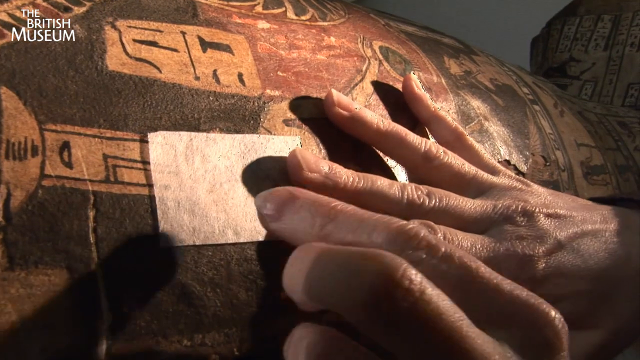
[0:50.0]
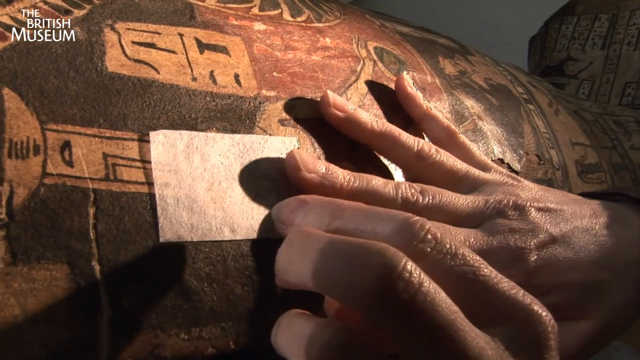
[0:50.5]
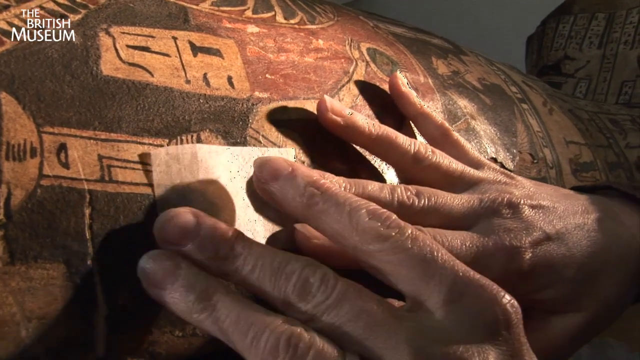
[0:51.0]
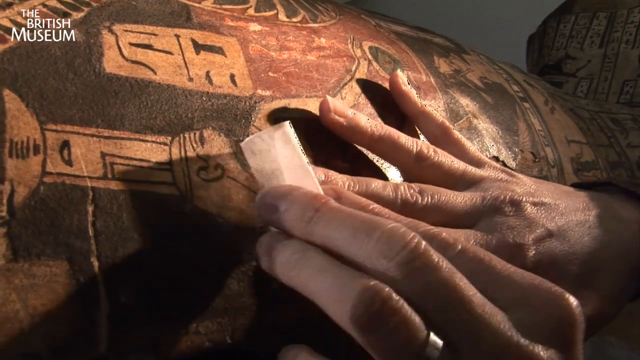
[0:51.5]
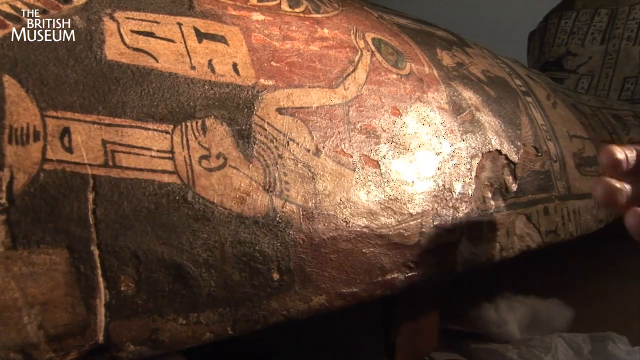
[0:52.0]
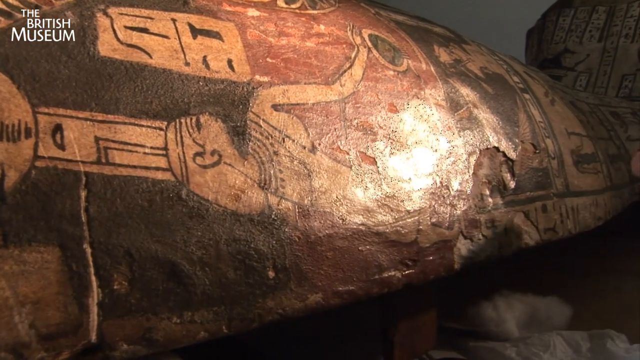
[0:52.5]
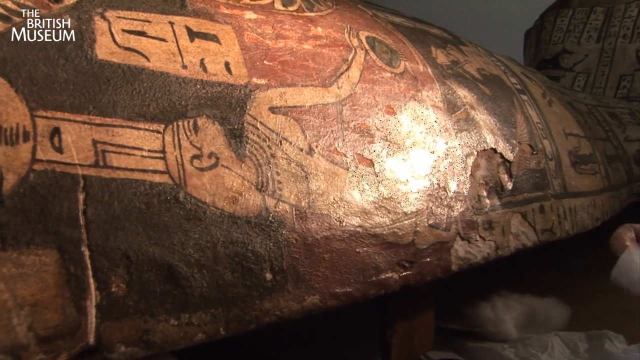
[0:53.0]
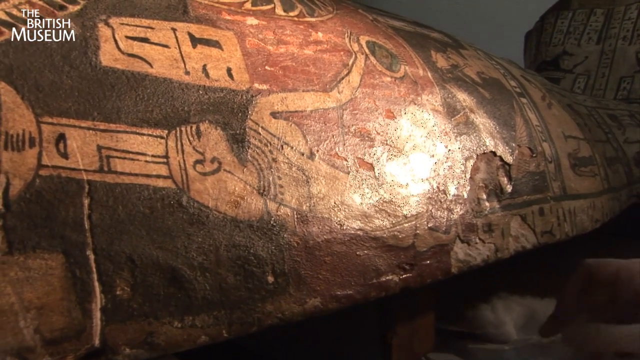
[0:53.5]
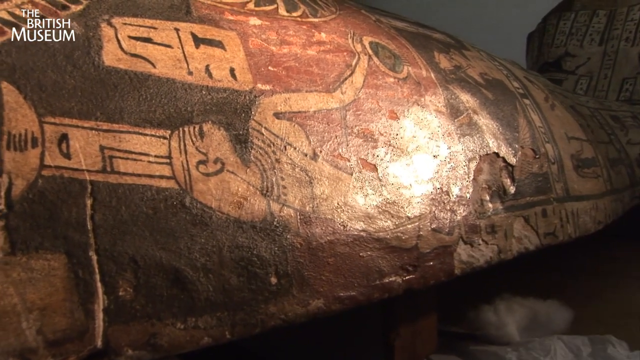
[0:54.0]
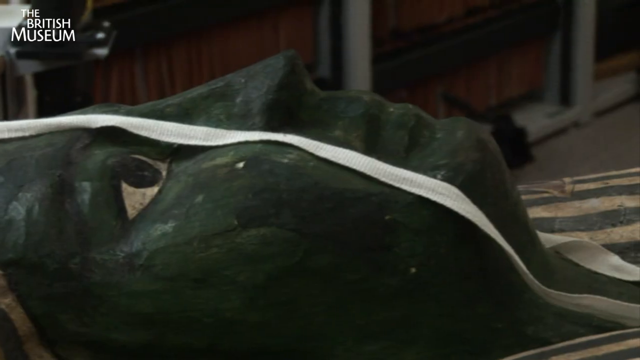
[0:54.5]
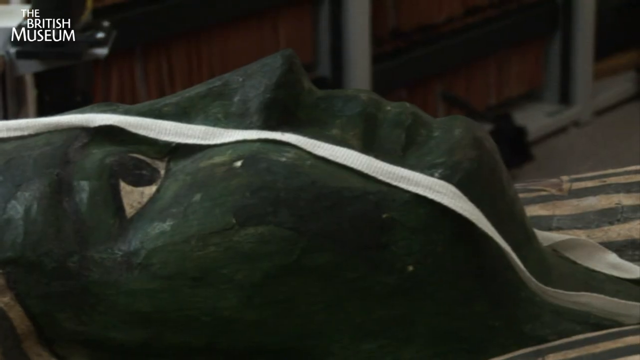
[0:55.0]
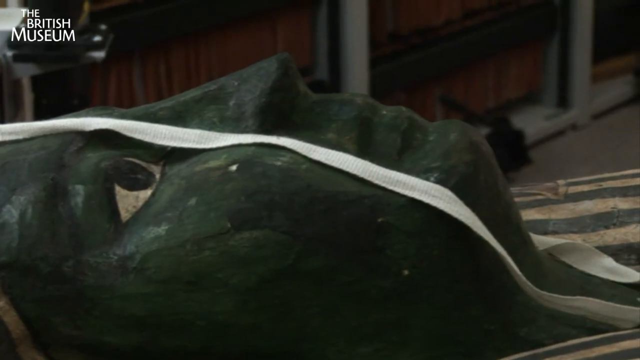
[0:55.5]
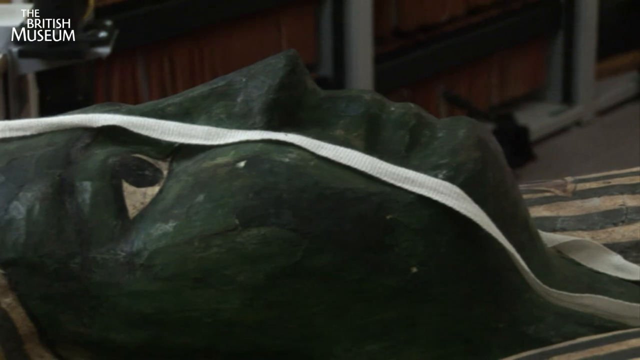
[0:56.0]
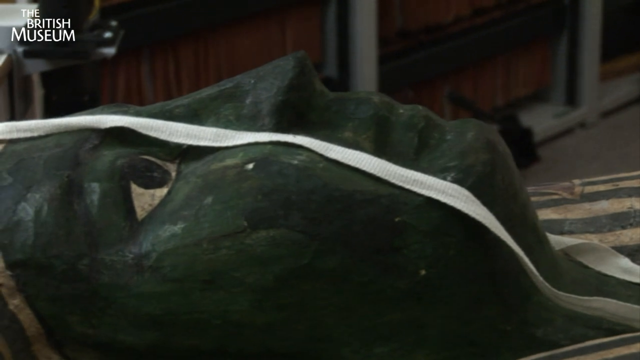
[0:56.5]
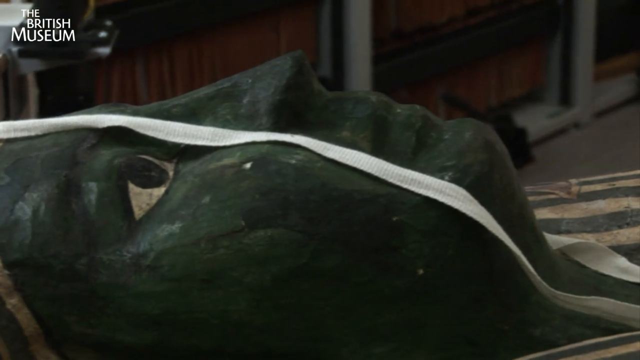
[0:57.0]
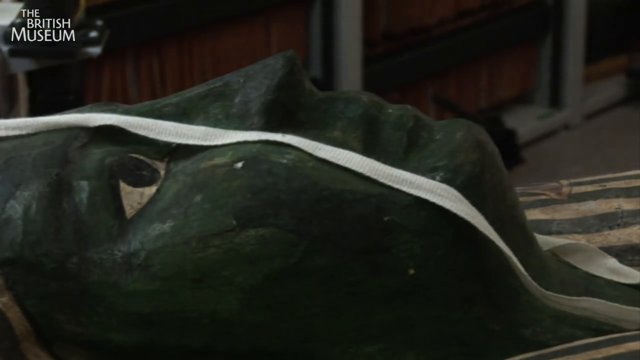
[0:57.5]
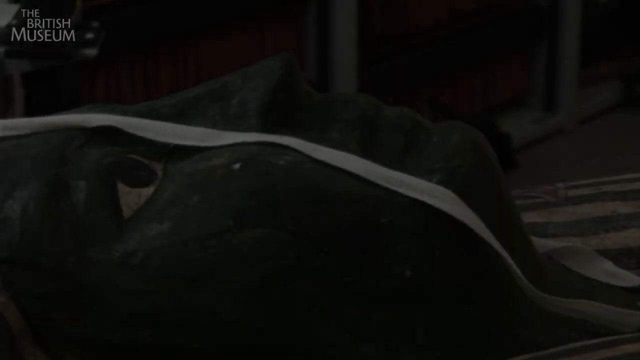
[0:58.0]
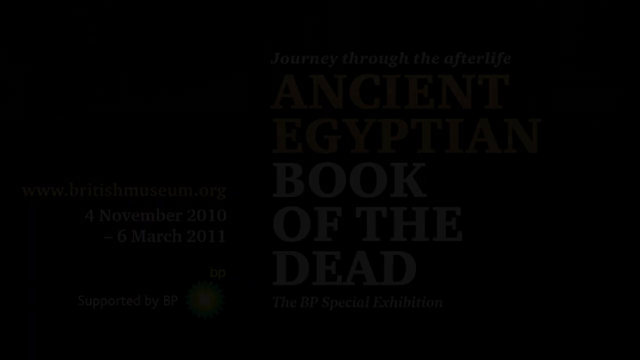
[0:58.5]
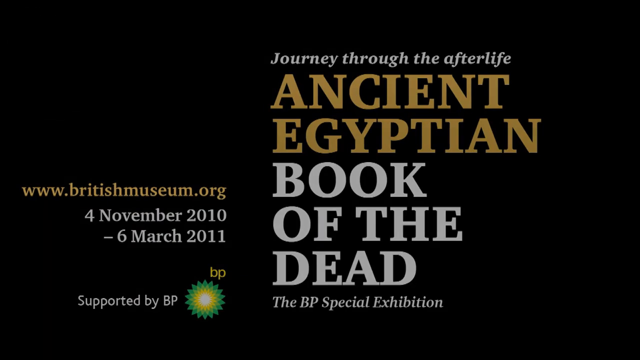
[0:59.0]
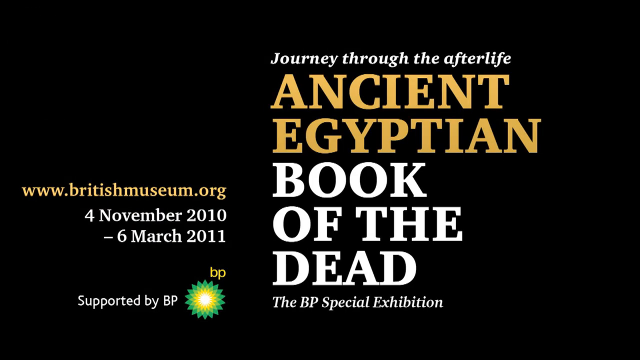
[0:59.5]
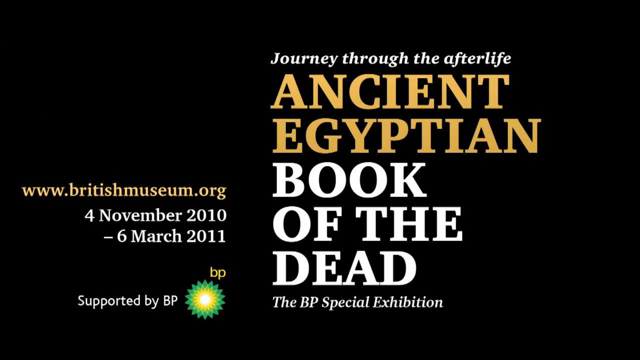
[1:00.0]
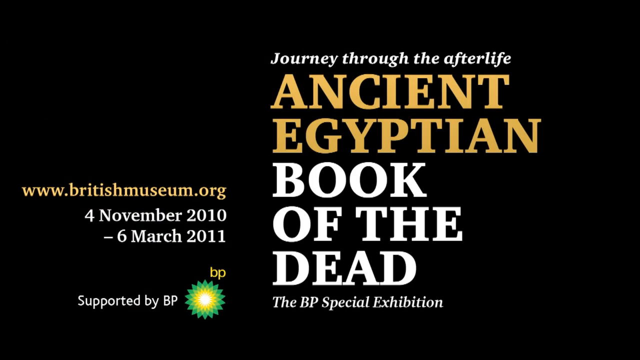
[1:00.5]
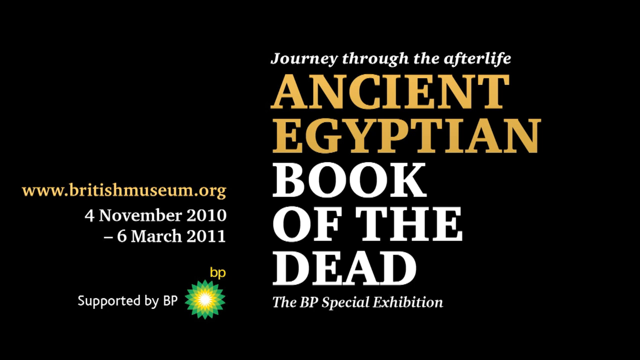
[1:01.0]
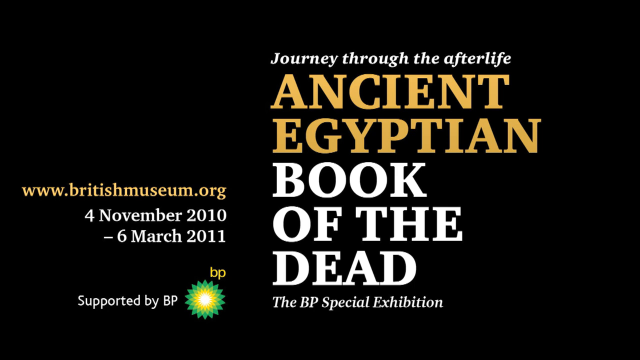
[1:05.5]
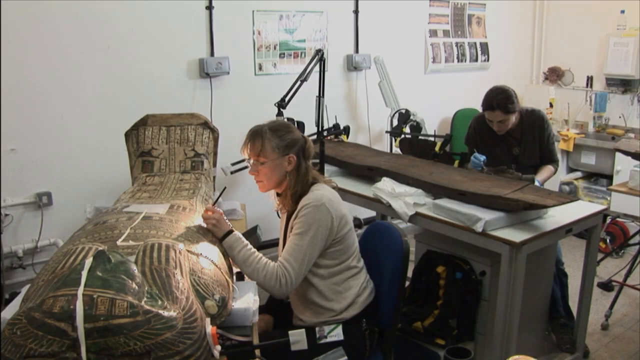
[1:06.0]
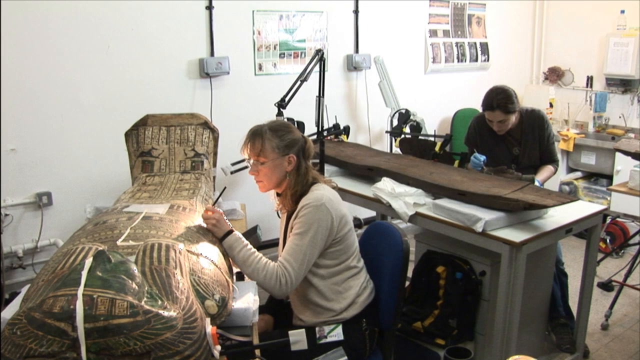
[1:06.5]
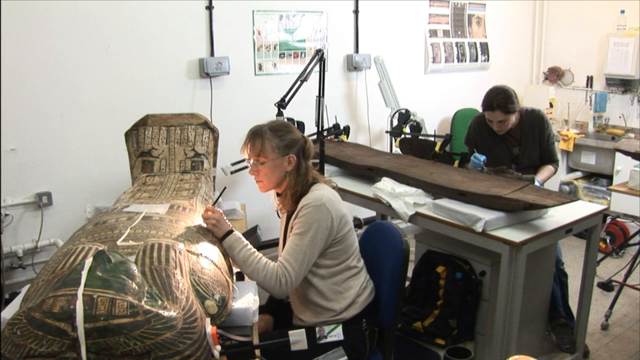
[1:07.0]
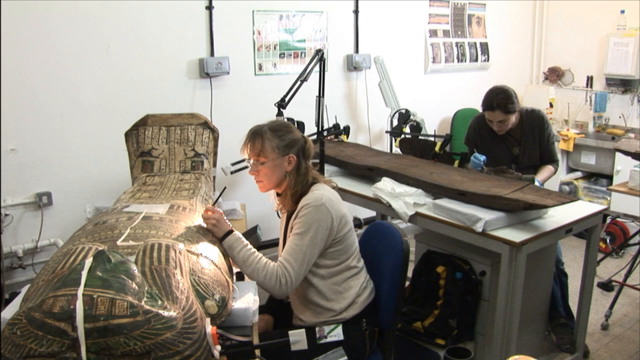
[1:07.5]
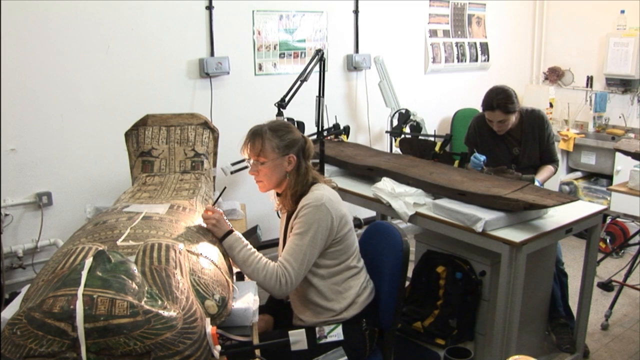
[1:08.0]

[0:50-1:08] A close-up of the coffin is shown, then the video goes to text reading "The British Museum" and "the Ancient Egyptian Book of the Dead", an exhibition presented by BP, with dates from November 4, 2010 running through March 2011. The woman appears to be an artist of some sort and works on the ancient artifact with great care. There is also a glimpse of the man working in the same room, apparently on some type of artifact made from wood; her work appears much more detailed than his.